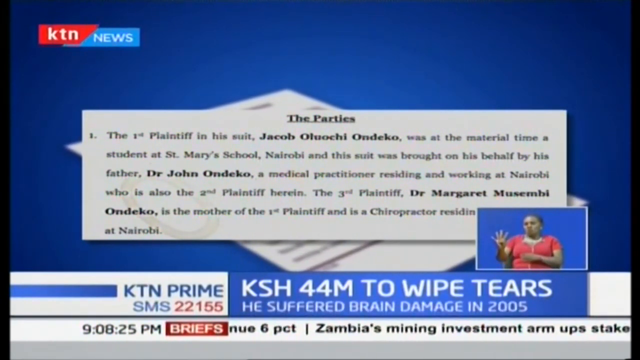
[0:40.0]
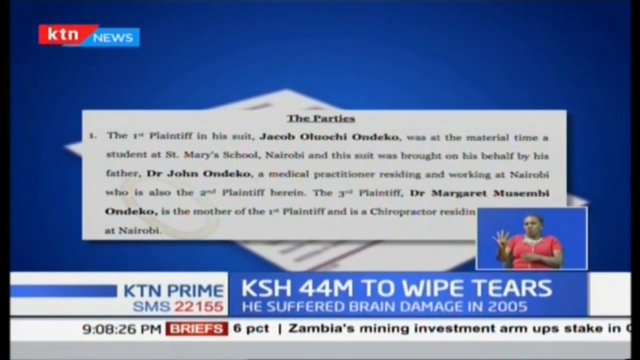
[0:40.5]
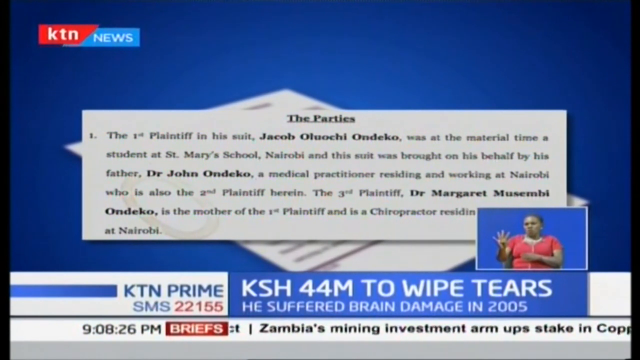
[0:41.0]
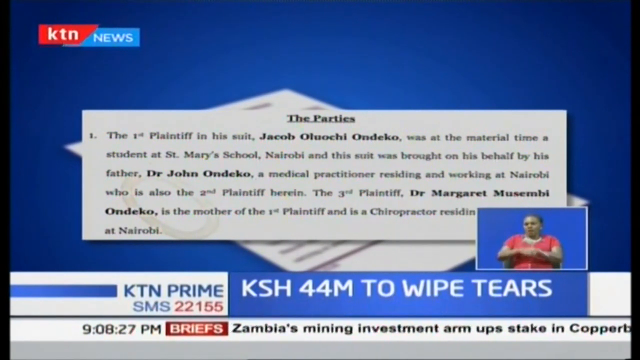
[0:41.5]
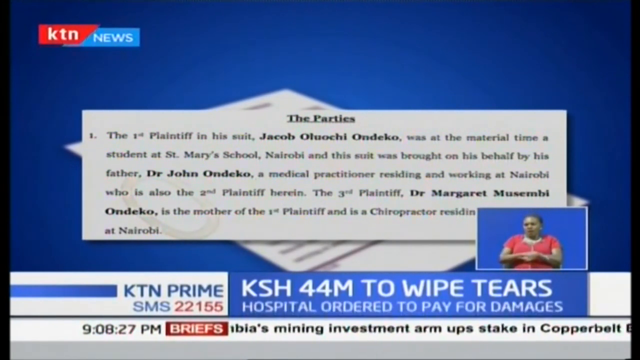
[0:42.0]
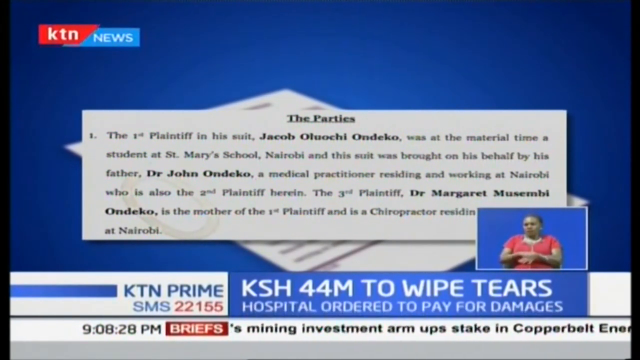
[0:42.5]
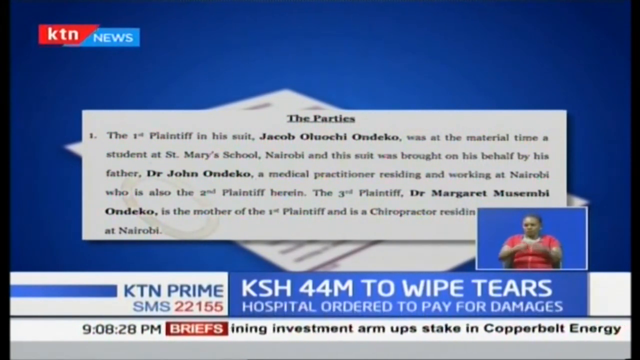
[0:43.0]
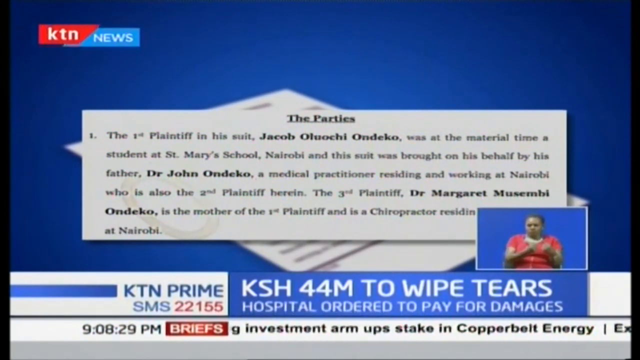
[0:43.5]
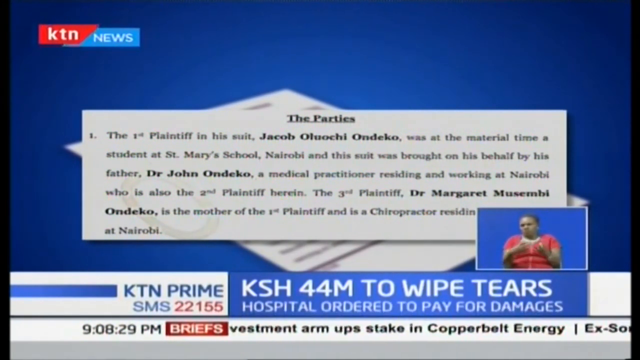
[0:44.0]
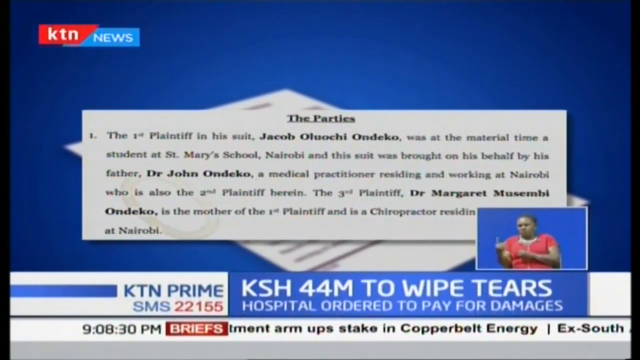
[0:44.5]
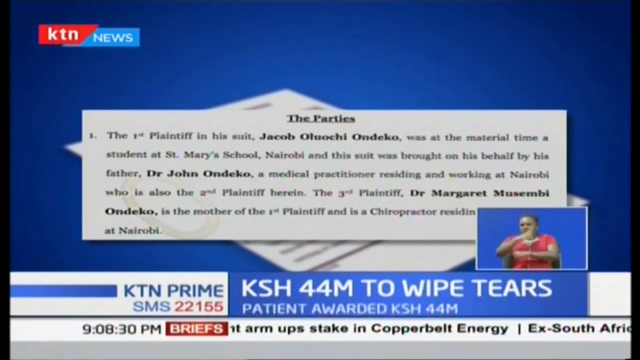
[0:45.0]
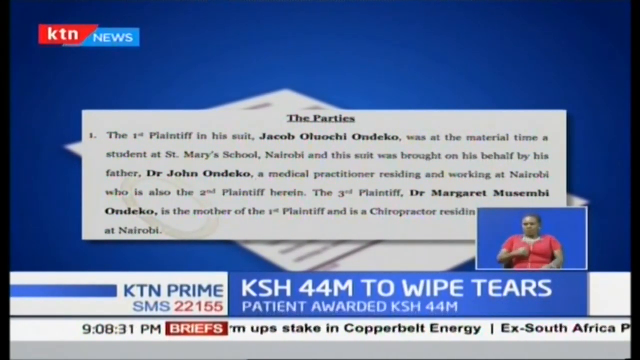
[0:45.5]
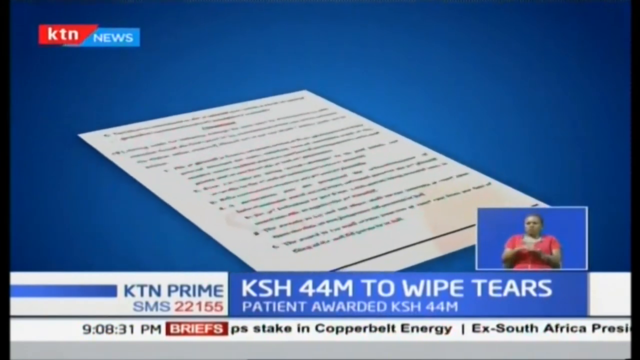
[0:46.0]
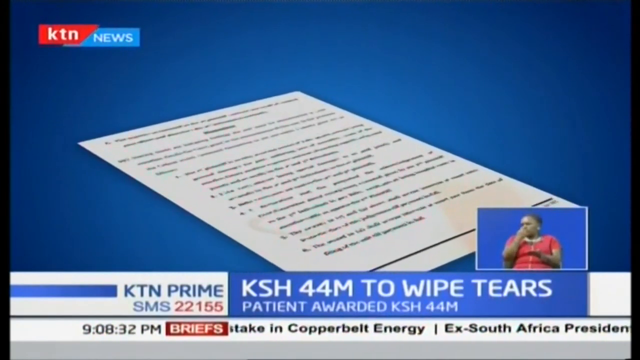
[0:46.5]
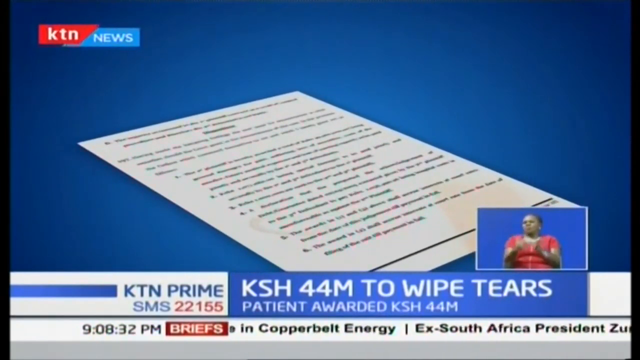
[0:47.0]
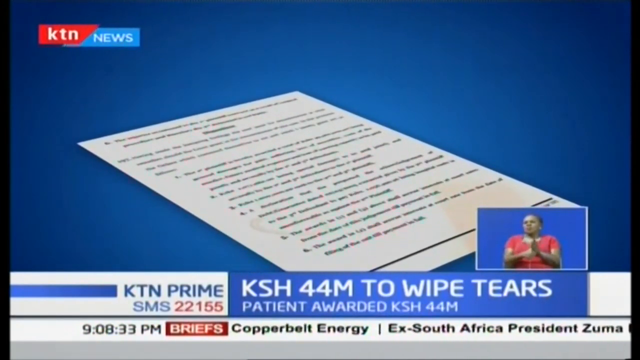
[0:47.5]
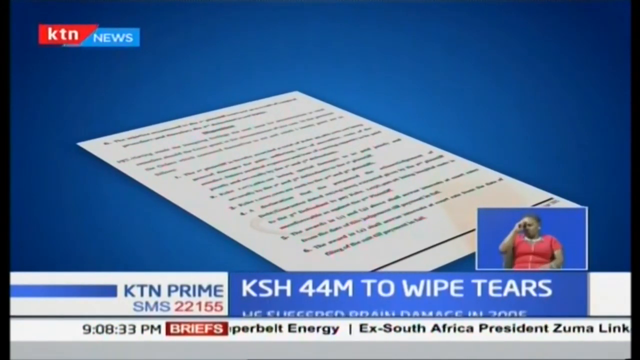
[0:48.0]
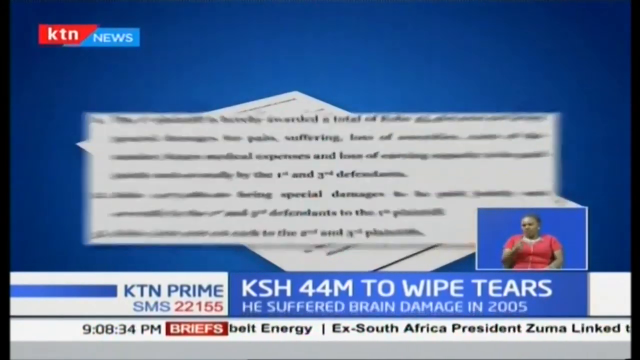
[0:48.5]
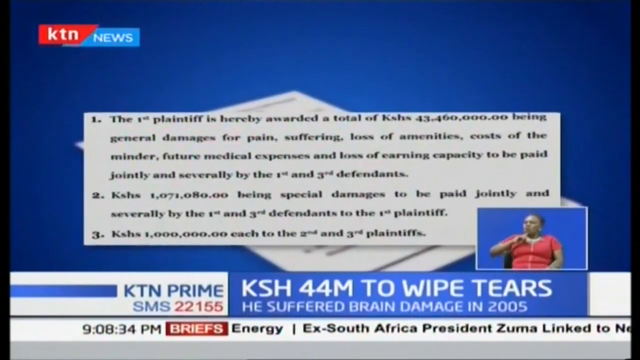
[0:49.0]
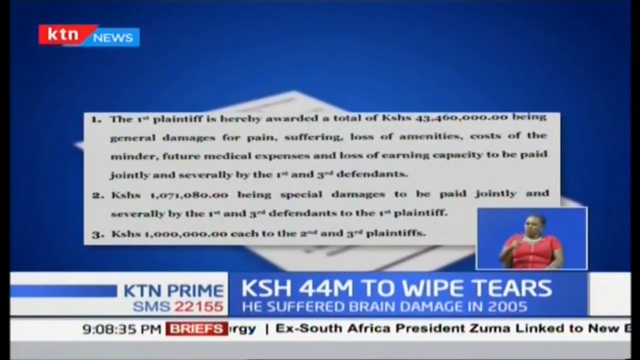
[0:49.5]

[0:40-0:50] The news headline at the bottom shows KTN Prime, that 44 million KSH will wipe the tears of the victims, and that the hospital is ordered to pay damages, with various news headlines running in the ticker along the bottom. Against a blue gradient background, text in the middle reads "the parties", listing the people involved in the lawsuit. A woman in a pink shirt in the bottom right corner performs sign language, moving her hands to the left. Another document comes in, stating that the first plaintiff is awarded 43 million KSHS as general damages for pain, suffering, future medical expenses and loss of earning capacity, paid jointly and separately by the first and third defendants.